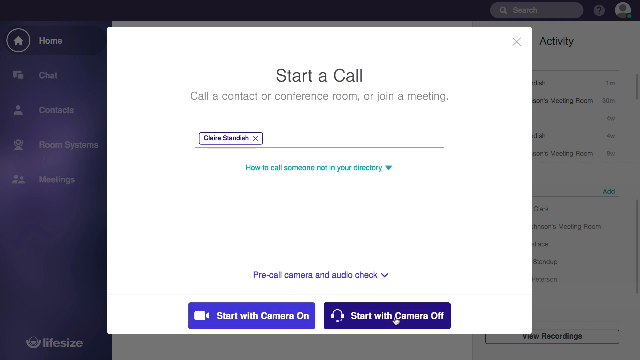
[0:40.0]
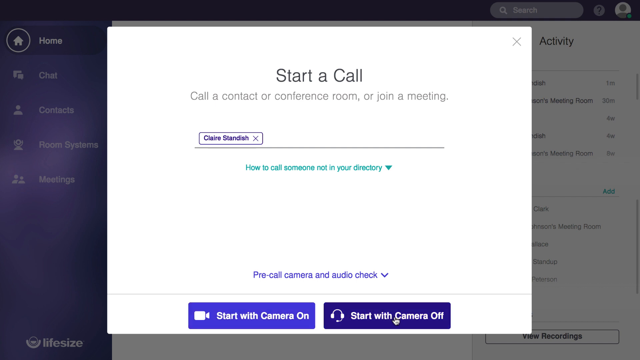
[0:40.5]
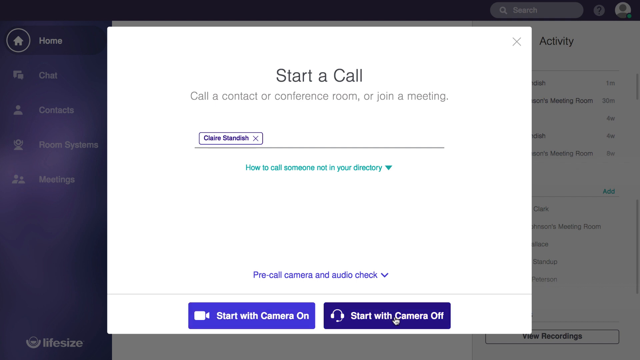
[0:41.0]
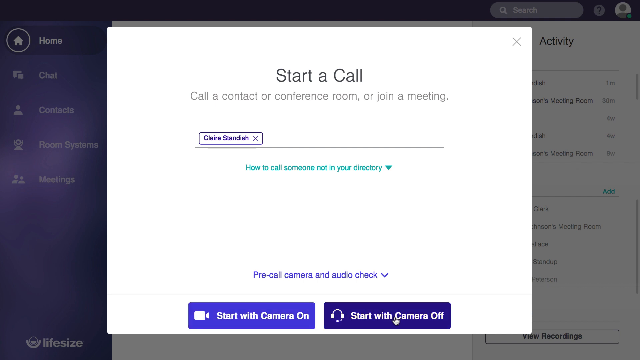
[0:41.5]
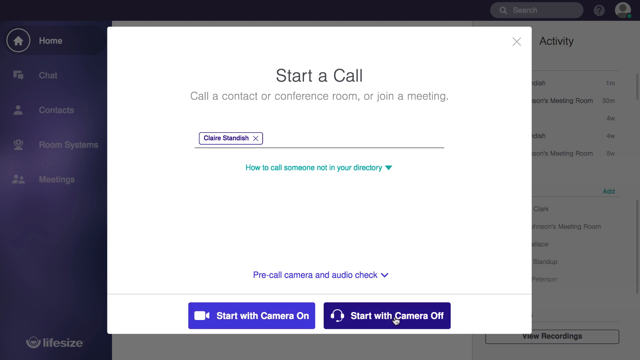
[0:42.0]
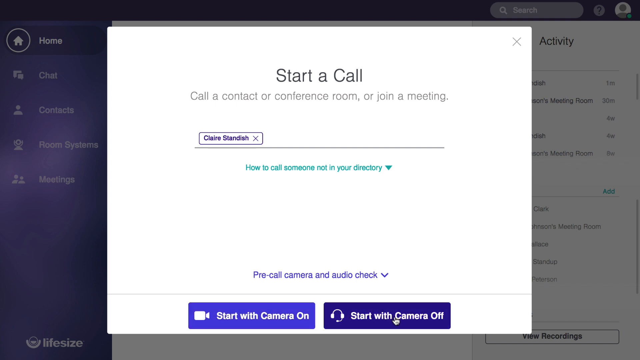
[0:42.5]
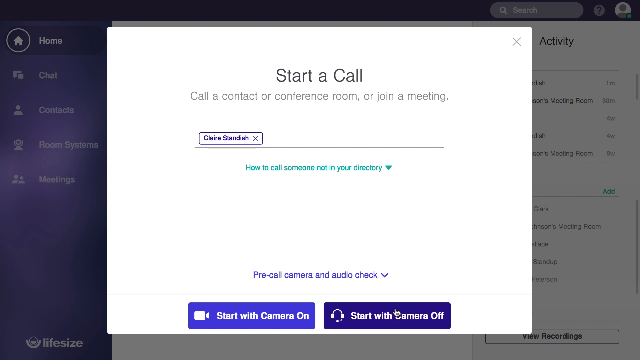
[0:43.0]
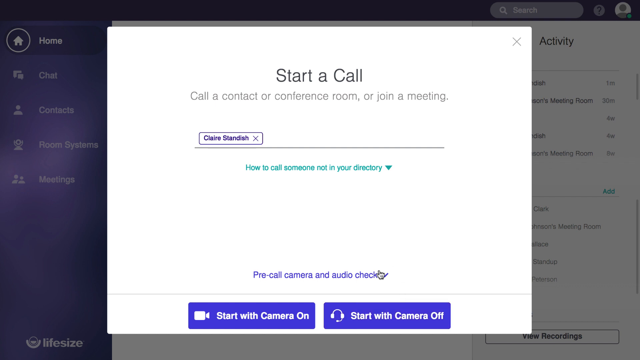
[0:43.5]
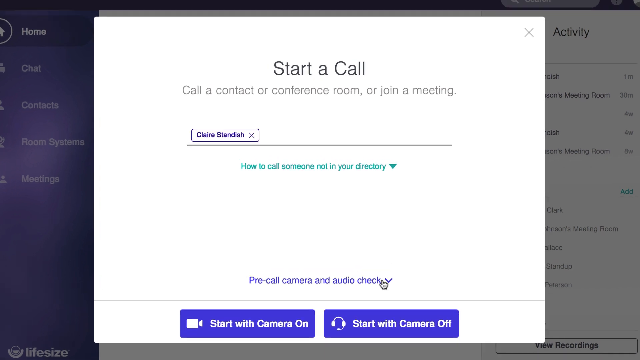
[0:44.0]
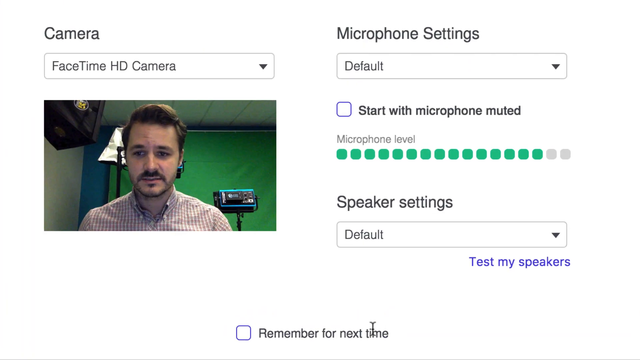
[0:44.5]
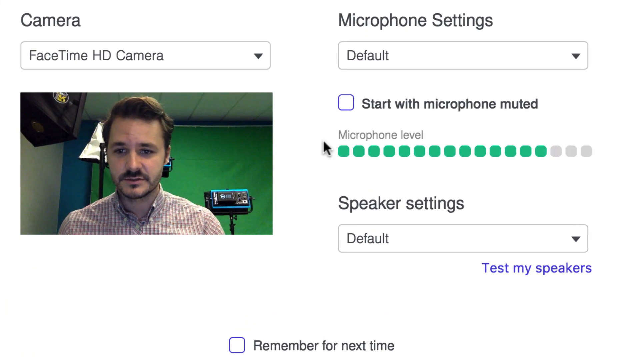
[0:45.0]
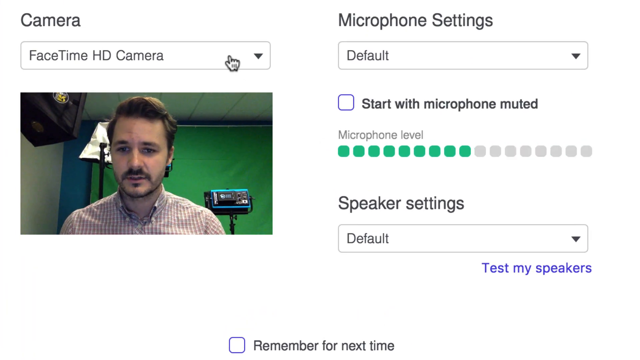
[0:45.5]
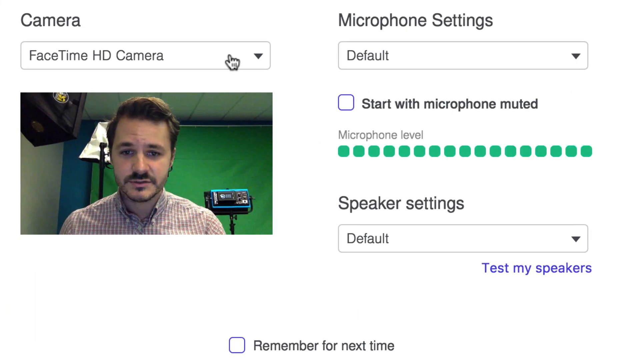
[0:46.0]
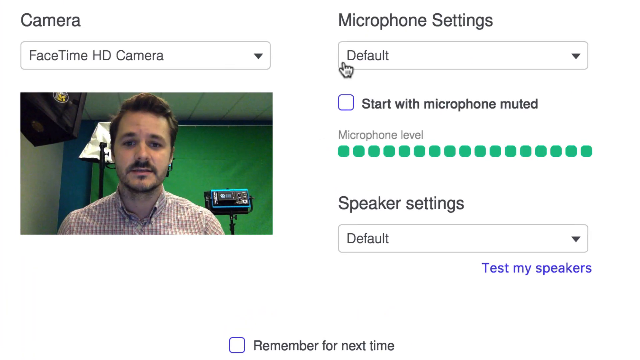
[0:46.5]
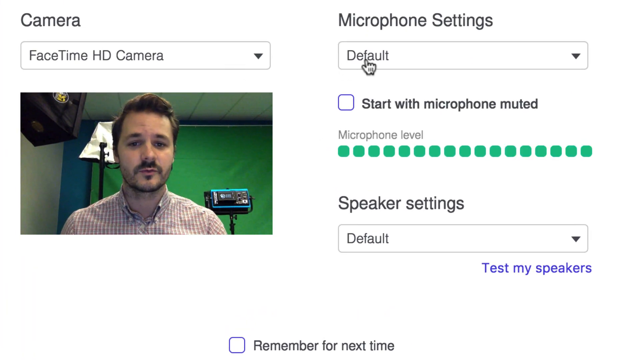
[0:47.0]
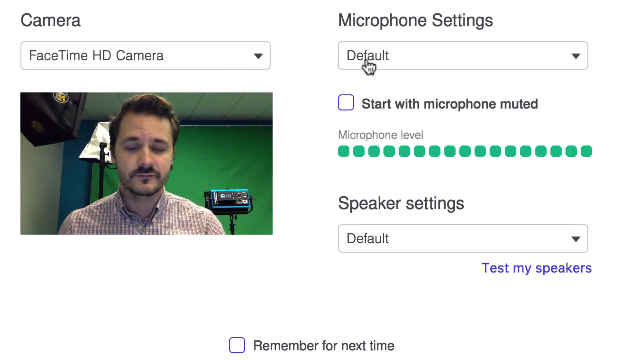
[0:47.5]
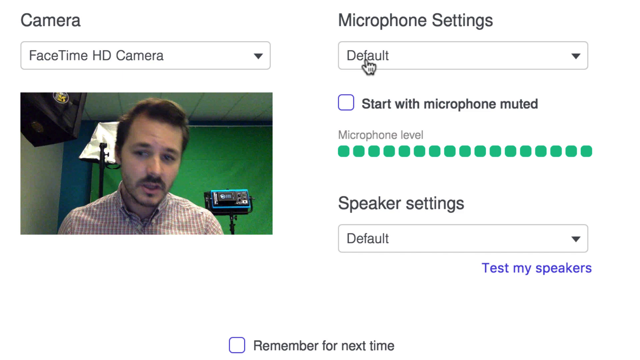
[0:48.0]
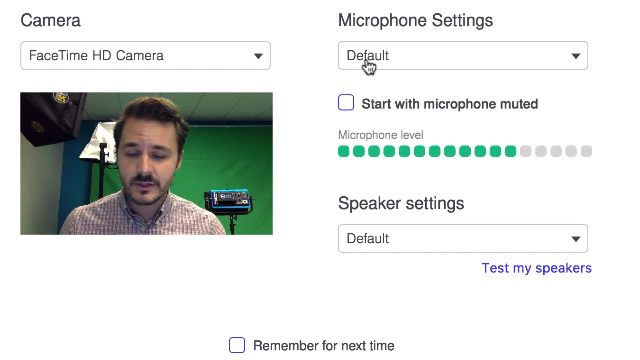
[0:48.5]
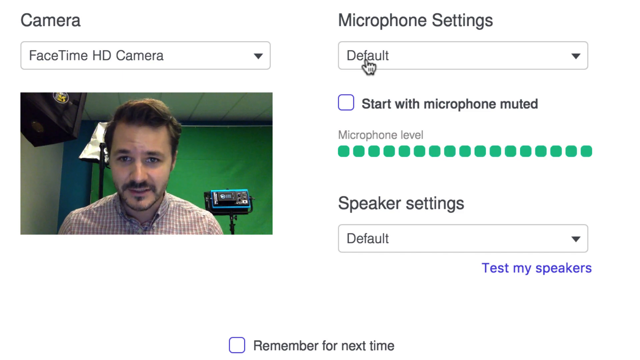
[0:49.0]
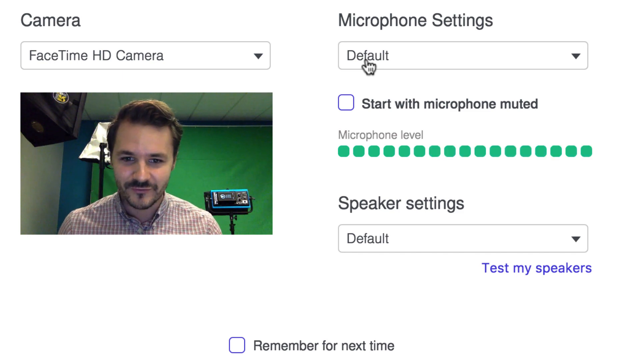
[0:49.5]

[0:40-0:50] An open computer screen shows a program for joining conferences through video conferencing or calls. At the top of the page is "Start a Call," and below it "Call a contact or conference room, or join a meeting." Below that, the contact Claire Standish appears in a box. At the bottom of the screen are two buttons, "Start with Camera On" and "Start with Camera Off." The cursor selects the second, and the scene changes to a different screen. On the left is a video box showing a man speaking and talking to the camera. Above him is a control for Camera with a drop-down box on the left, and on the right side is a Microphone settings header with another drop-down box below.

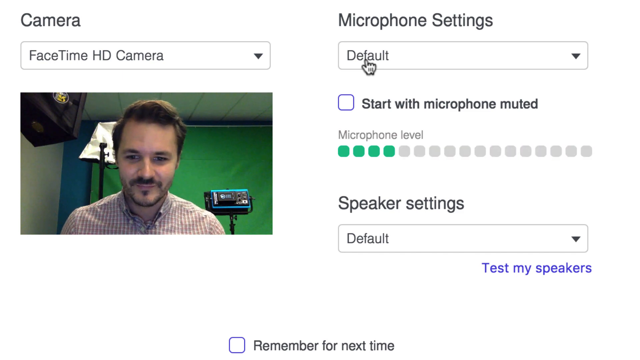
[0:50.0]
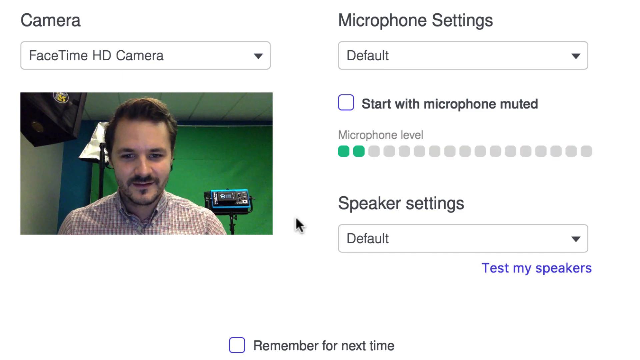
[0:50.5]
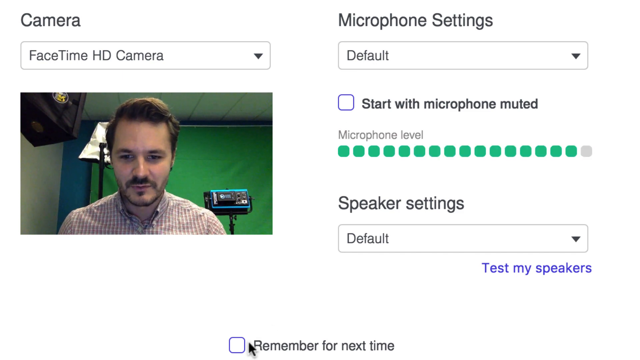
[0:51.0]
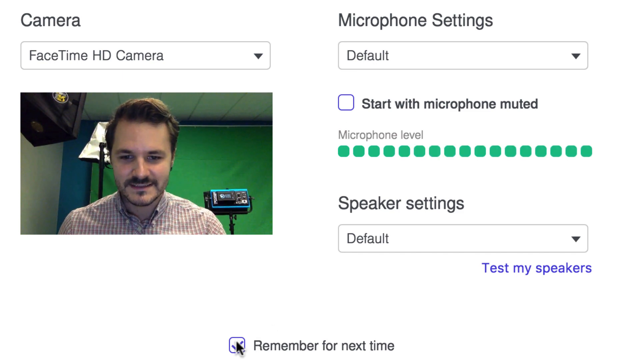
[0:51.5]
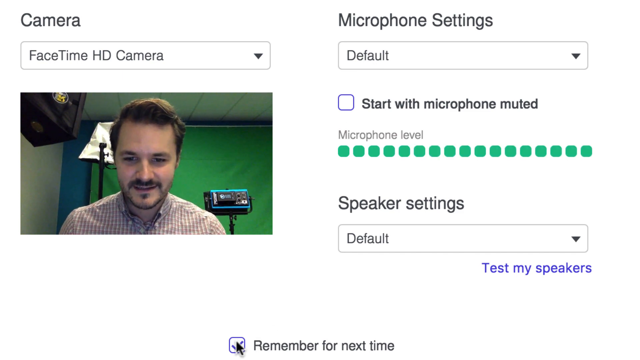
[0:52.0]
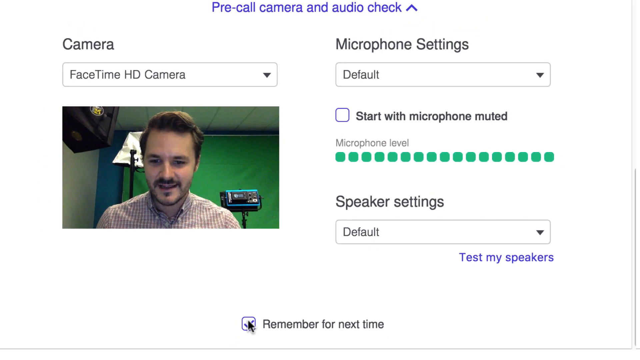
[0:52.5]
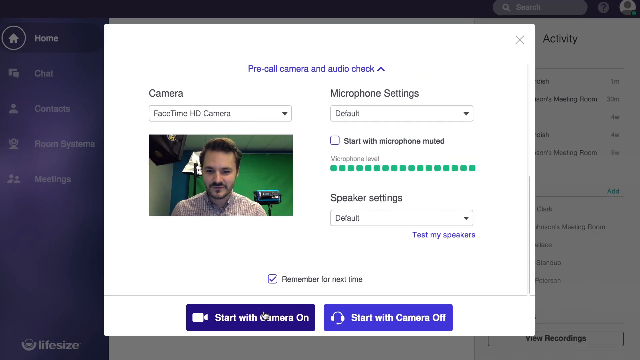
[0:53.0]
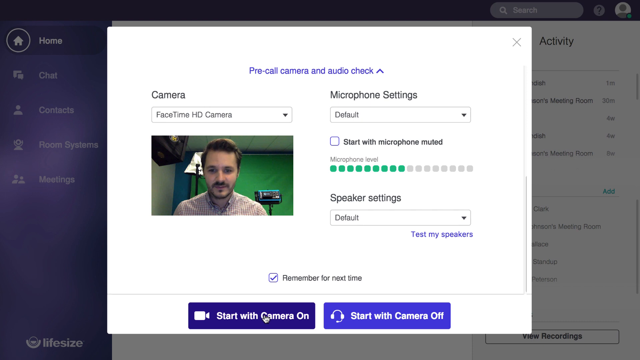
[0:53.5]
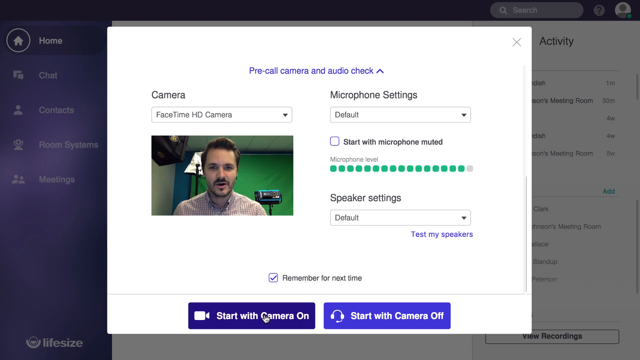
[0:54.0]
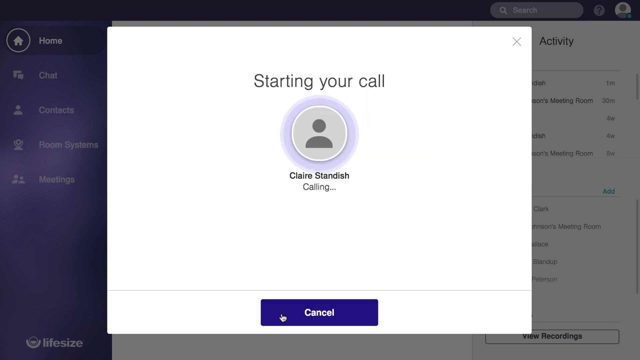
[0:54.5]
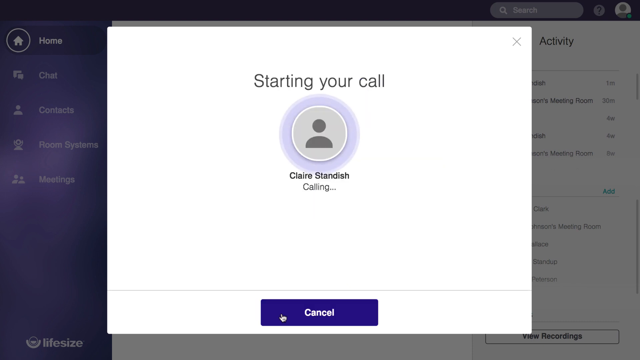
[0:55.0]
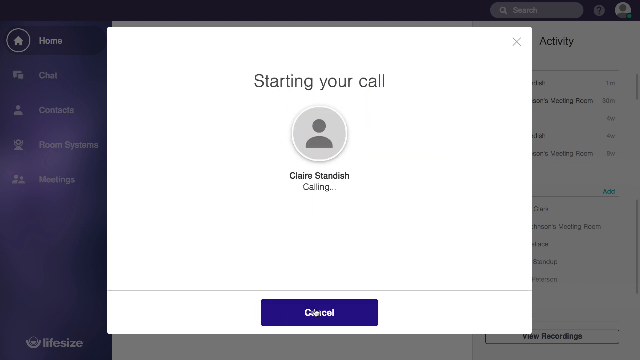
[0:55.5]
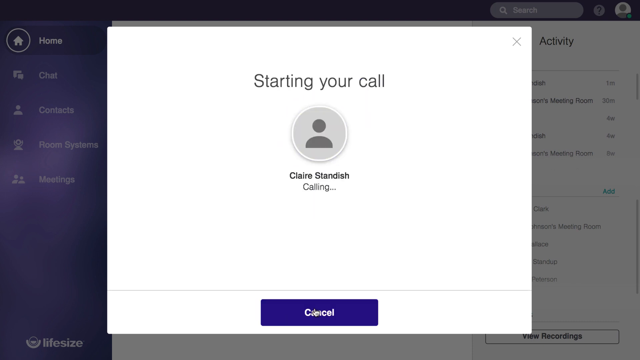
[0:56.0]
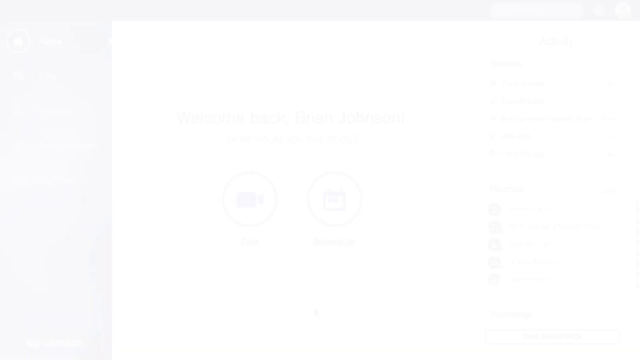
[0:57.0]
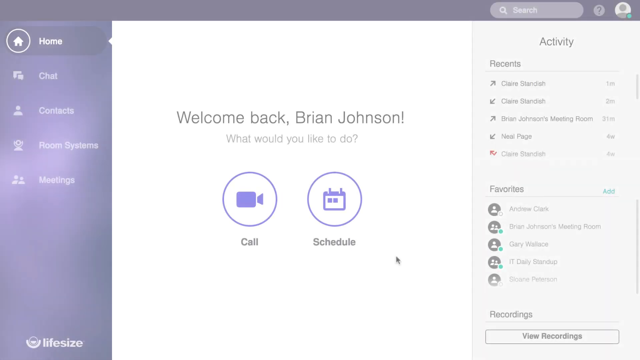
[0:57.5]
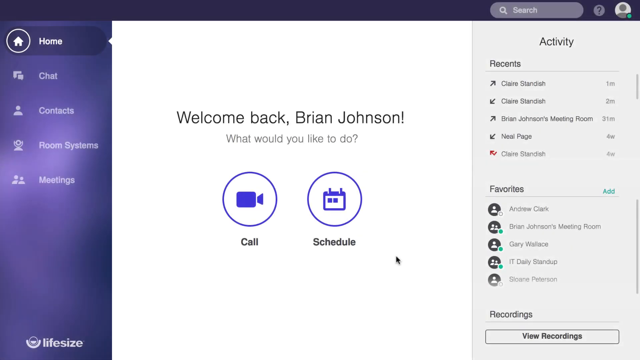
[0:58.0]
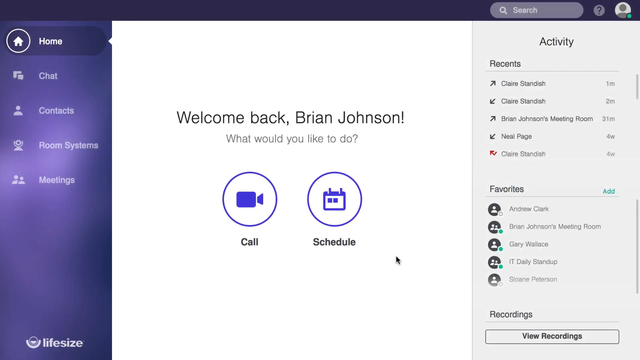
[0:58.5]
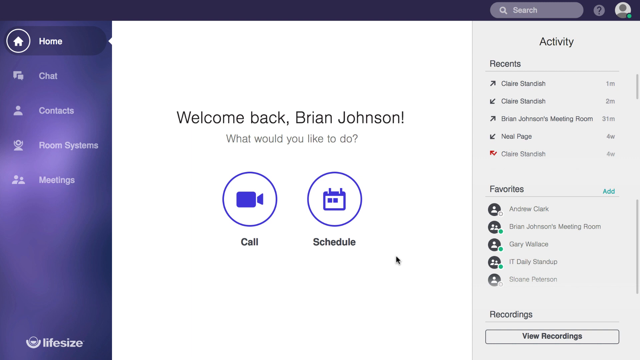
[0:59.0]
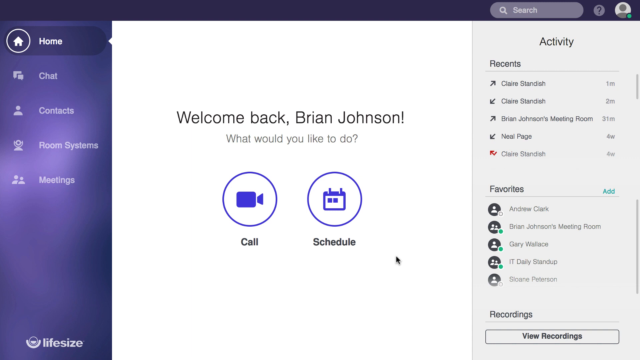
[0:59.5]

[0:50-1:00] A video conferencing program is running on the screen. On the left side, a man in a video box is speaking to someone, and above him are controls for camera and microphone settings. The camera pulls away from the page, revealing a "Start with Camera On" button and a "Start with Camera Off" button at the bottom of the screen. The cursor clicks "Start with Camera On," and the screen switches to one that says "Starting your call." A person icon appears below that, with the name Claire Standish and Calling underneath. At the bottom is a Cancel button.